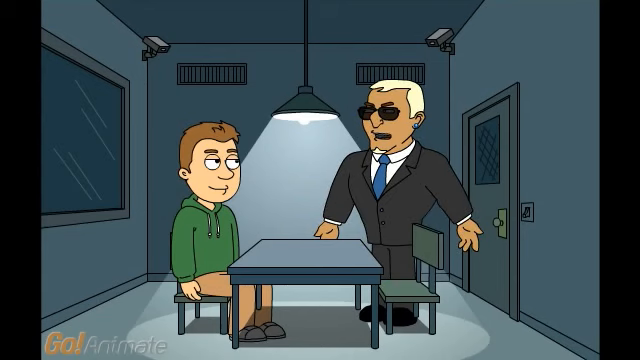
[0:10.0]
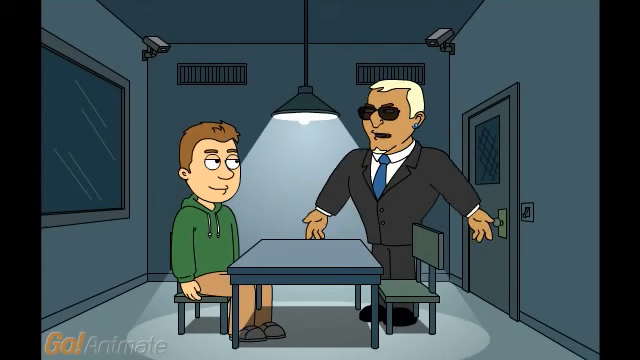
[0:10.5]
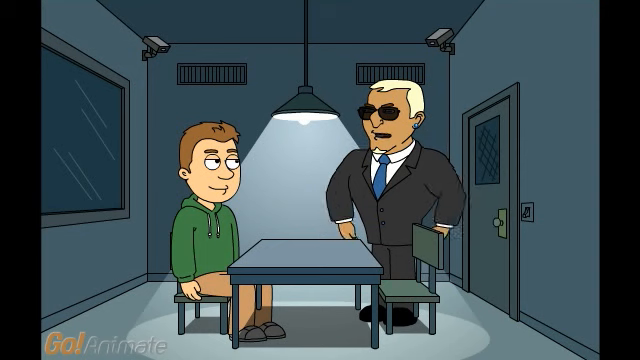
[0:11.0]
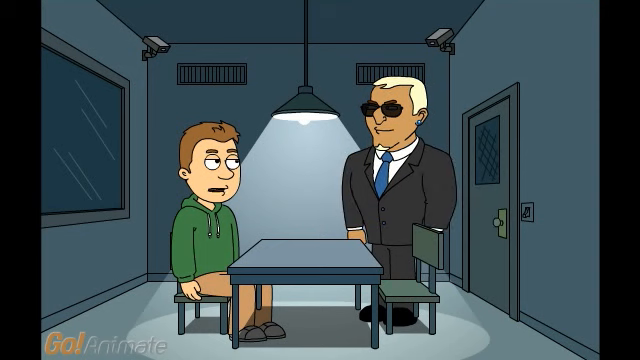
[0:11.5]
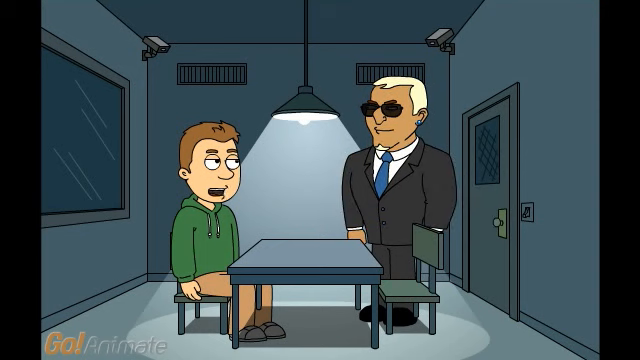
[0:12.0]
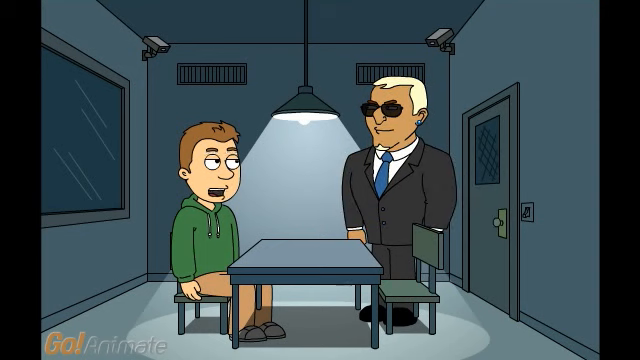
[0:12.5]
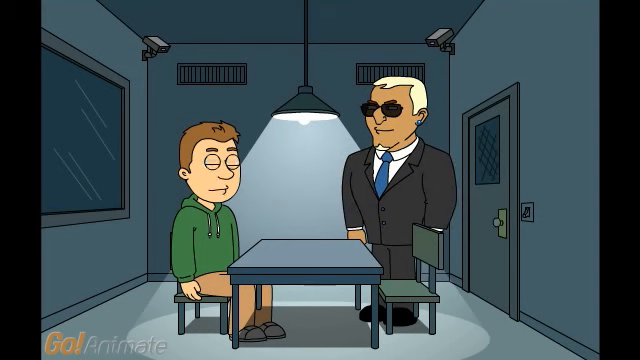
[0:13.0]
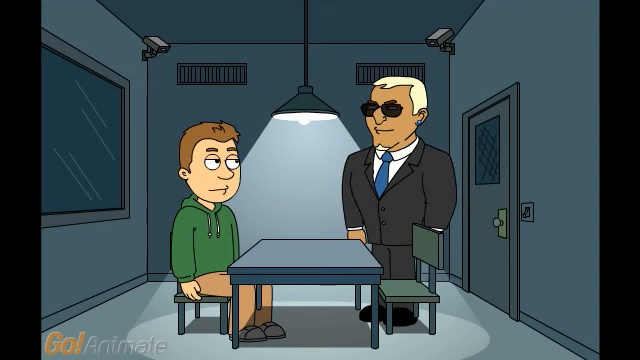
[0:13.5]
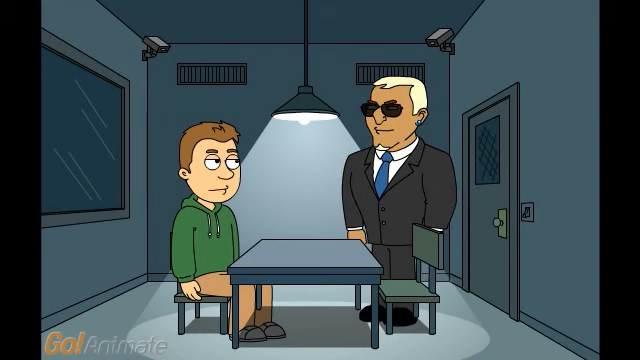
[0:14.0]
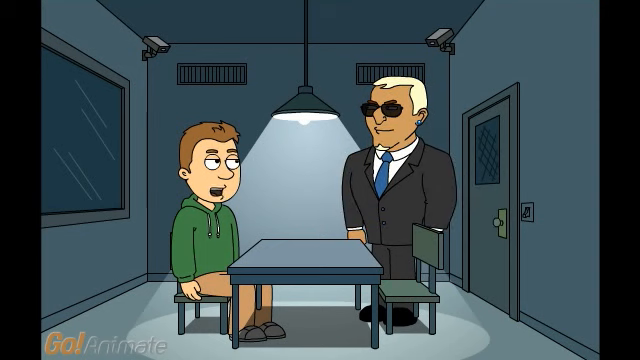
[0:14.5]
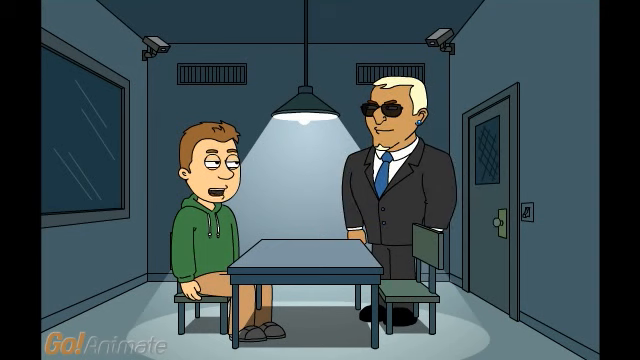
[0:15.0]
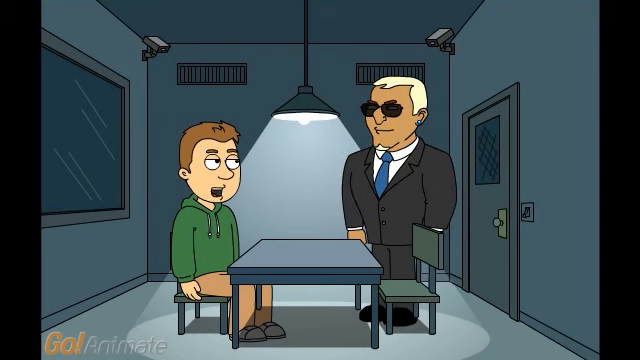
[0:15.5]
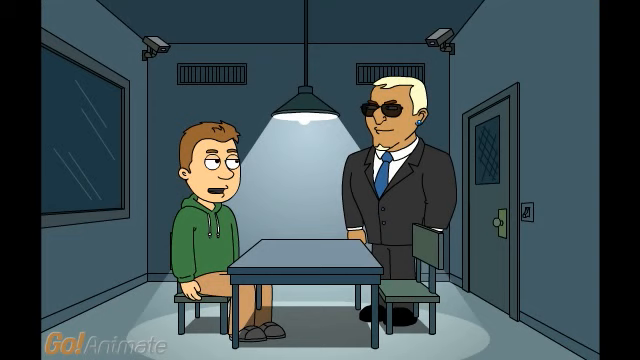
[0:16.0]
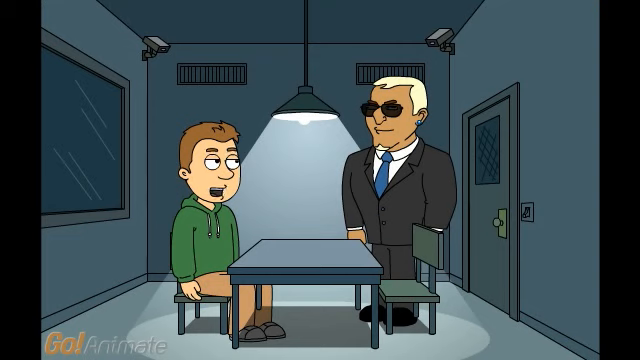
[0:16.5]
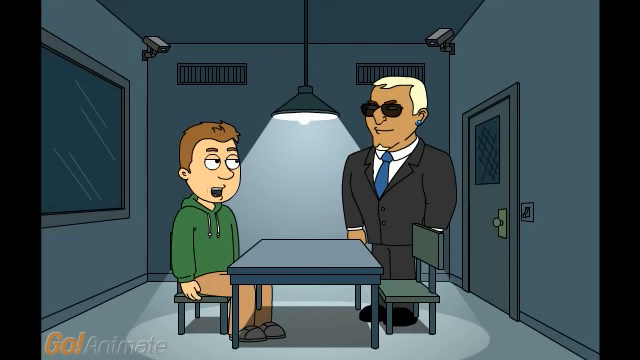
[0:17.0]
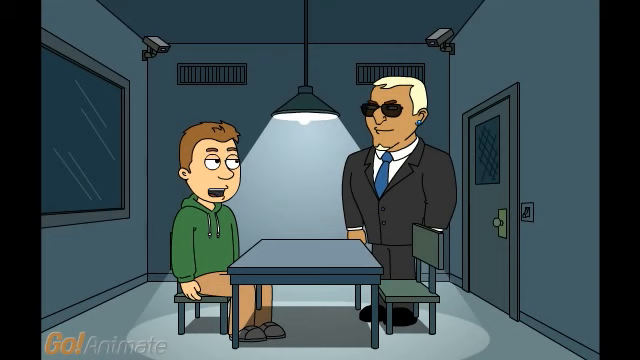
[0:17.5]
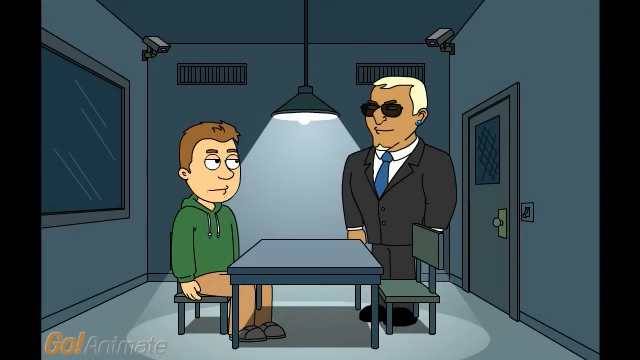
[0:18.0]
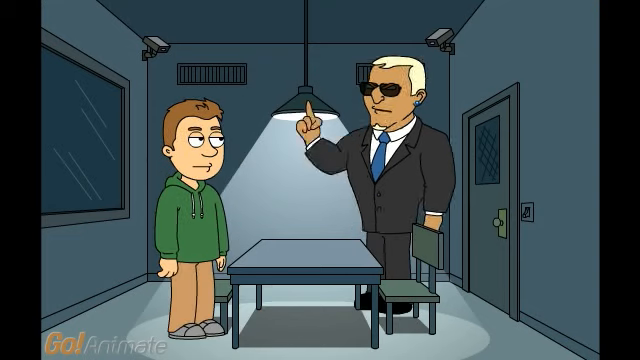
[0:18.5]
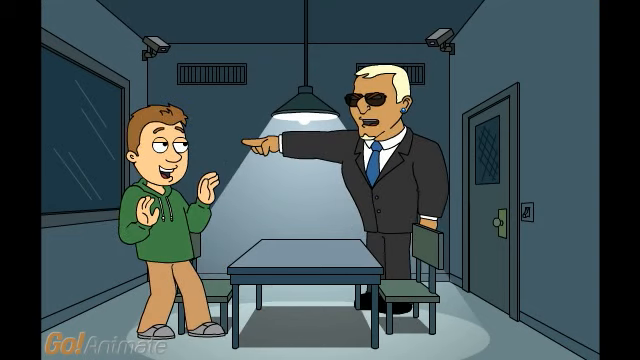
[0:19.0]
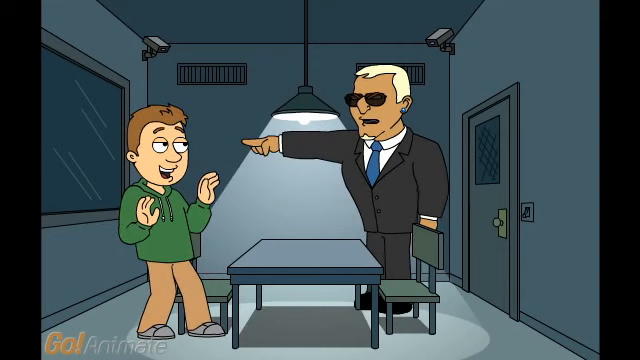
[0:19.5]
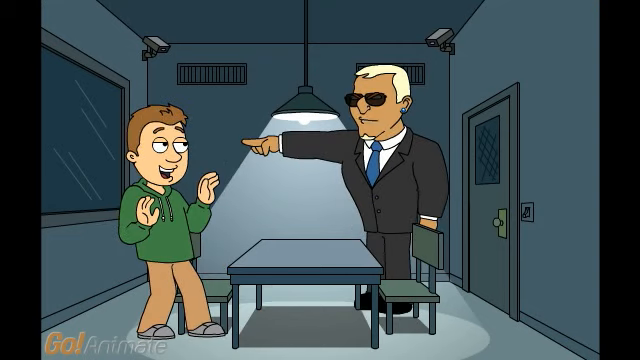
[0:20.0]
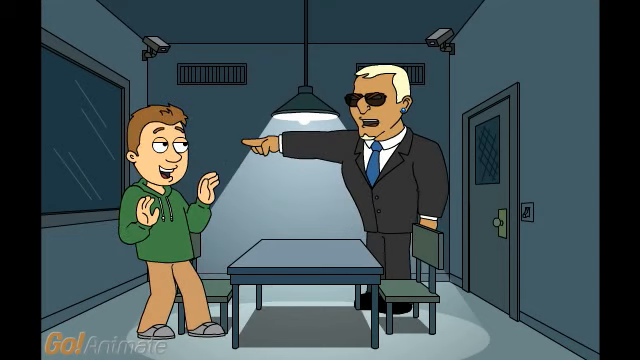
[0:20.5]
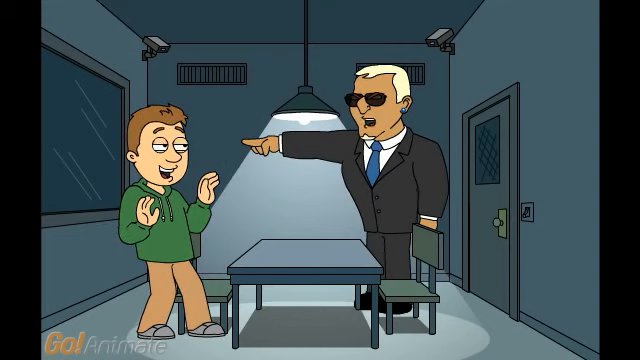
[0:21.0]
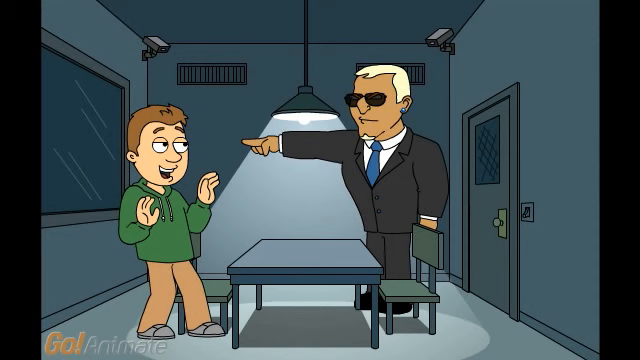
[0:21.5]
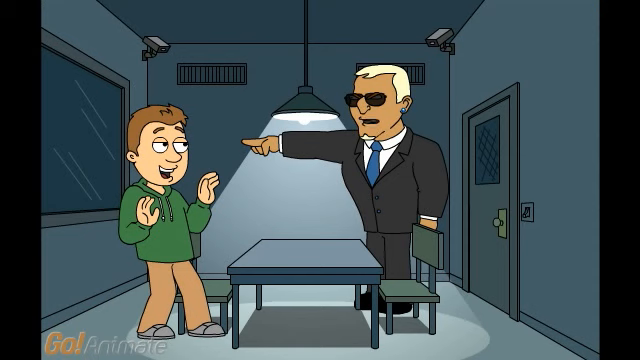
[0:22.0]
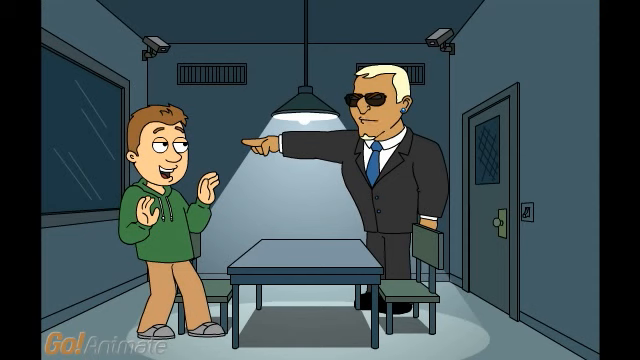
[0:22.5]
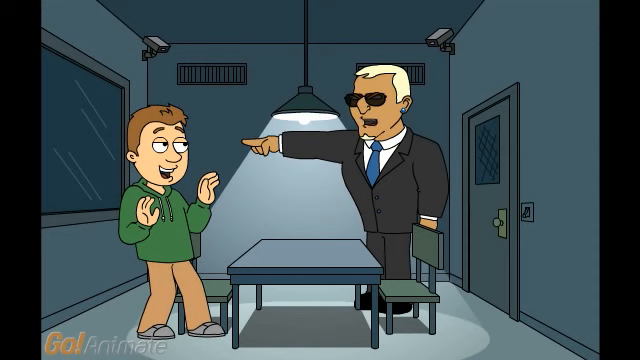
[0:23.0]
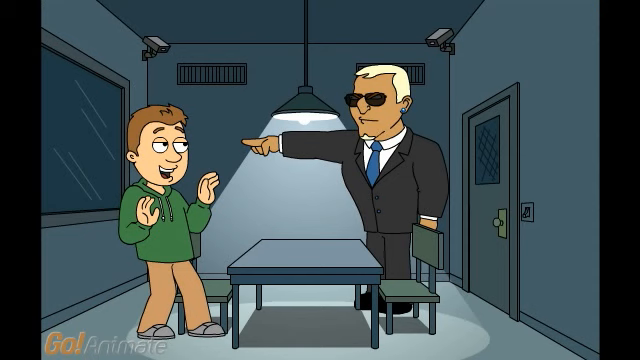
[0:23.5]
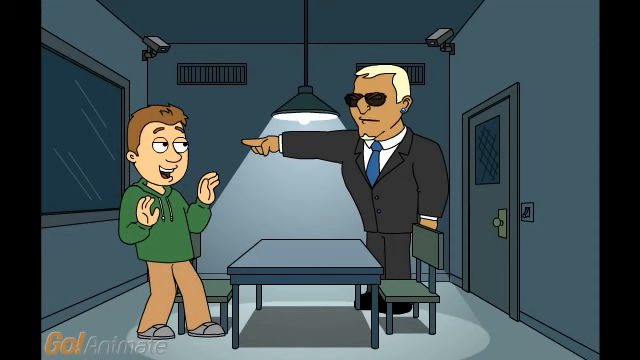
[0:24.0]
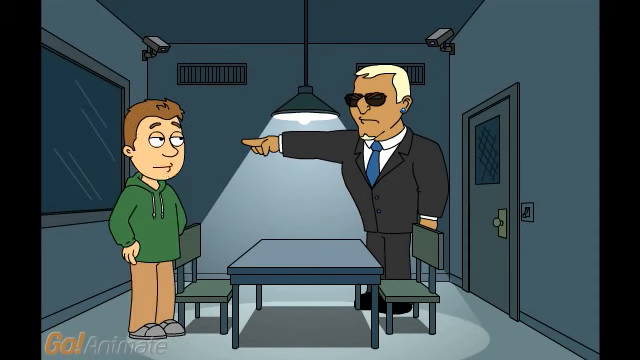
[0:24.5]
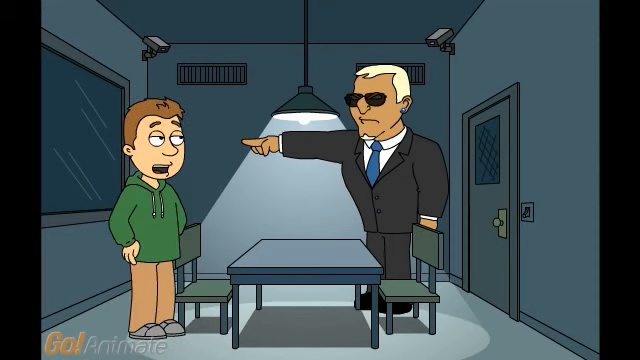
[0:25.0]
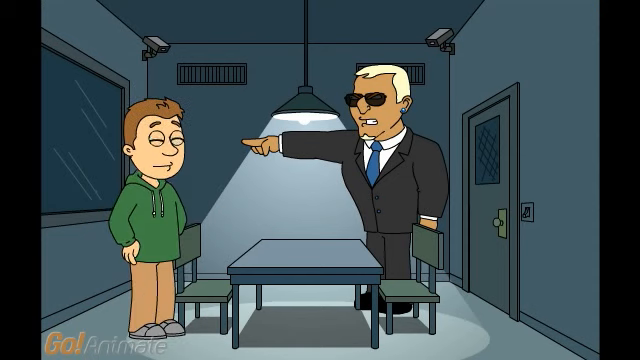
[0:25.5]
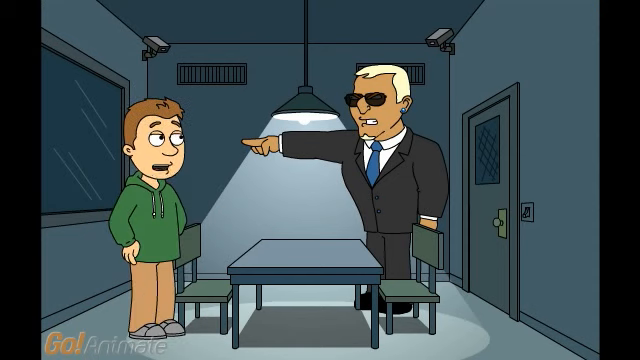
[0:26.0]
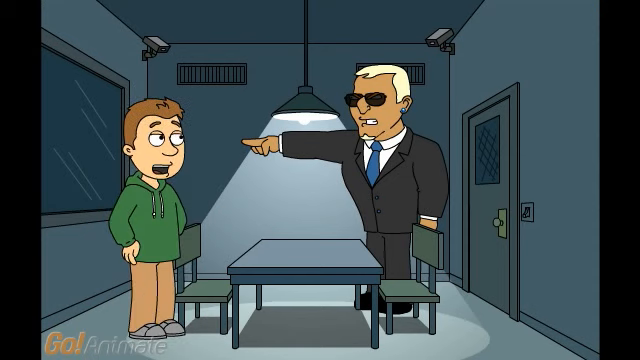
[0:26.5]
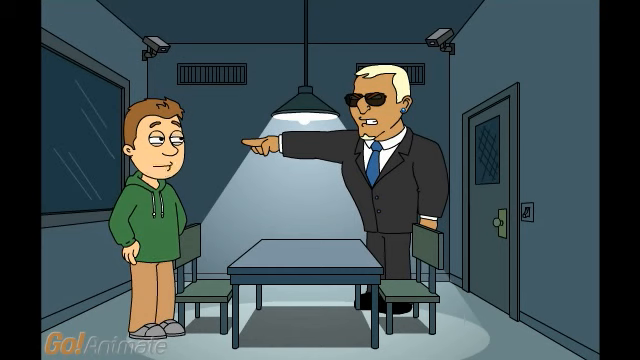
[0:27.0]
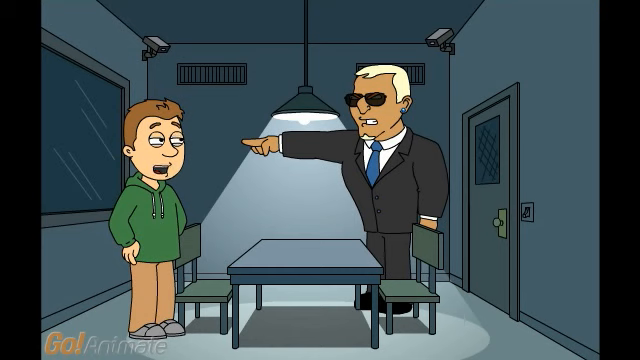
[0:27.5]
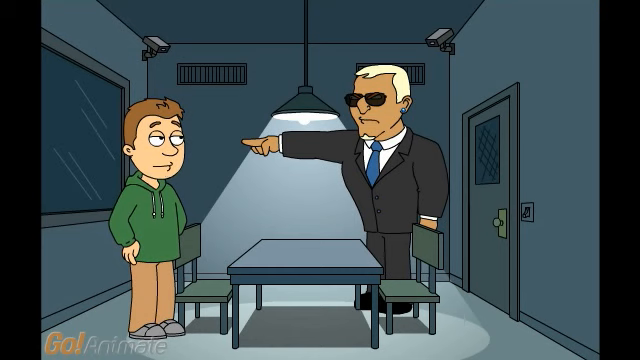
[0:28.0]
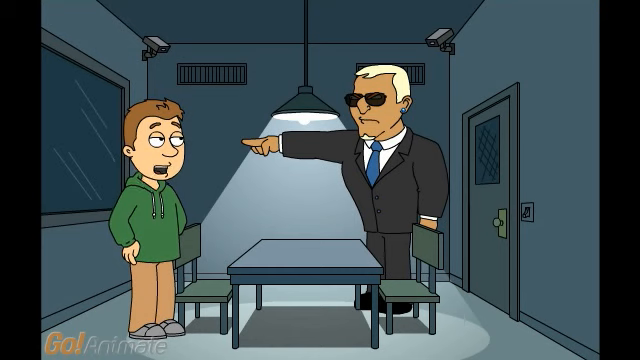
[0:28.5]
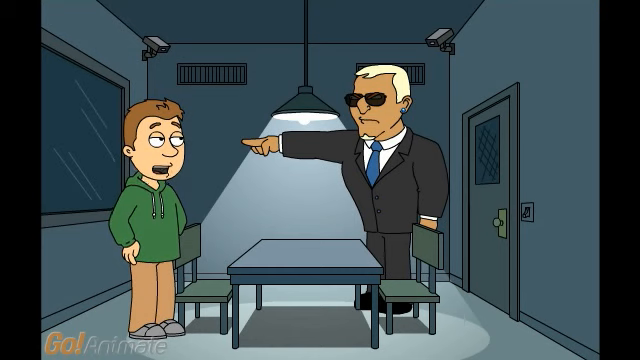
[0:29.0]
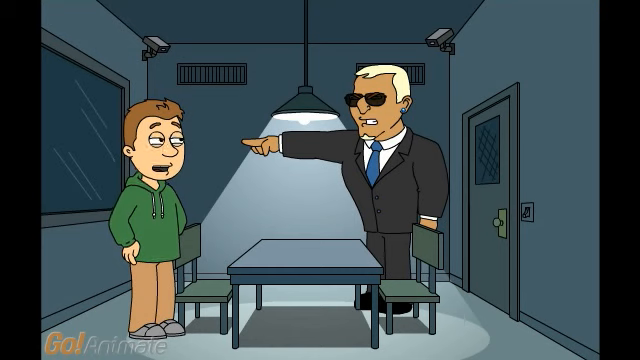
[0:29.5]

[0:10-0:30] A man with glasses and white hair, wearing a black suit, a white shirt and a blue tie, stretches his hand toward the little boy, who looks quite frightened. The two are having a conversation. They are in a room with the spotlights on; the boy is sitting and the man is standing. There is a table, two chairs, a door and cameras. The room seems to be an interrogation room, and the man in the suit appears to be an investigator questioning the boy.